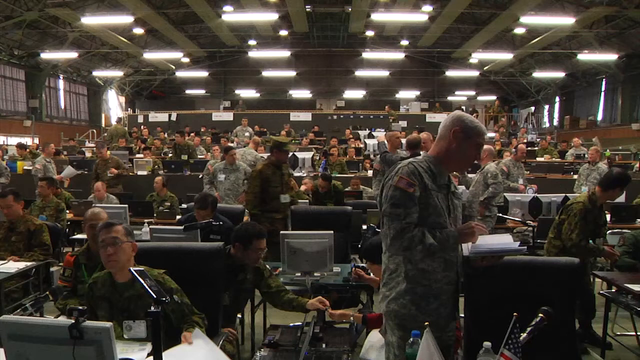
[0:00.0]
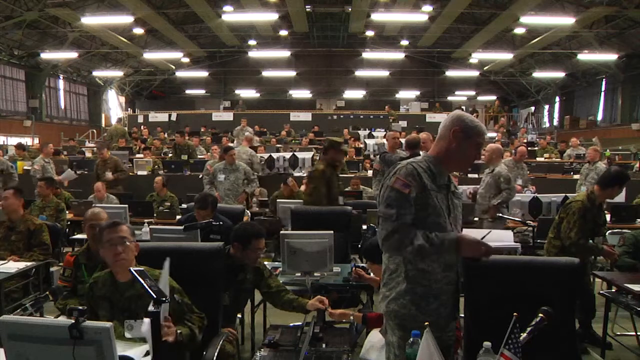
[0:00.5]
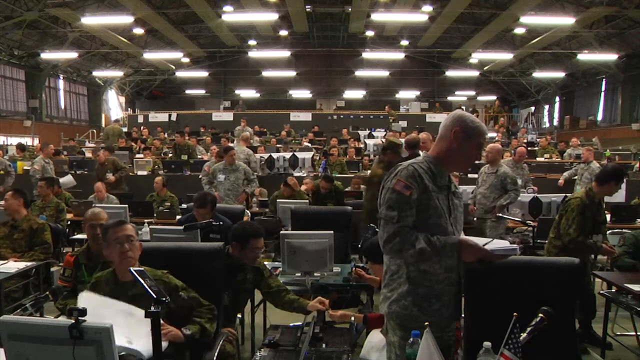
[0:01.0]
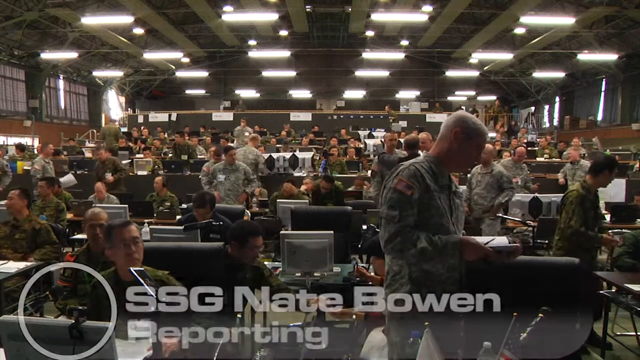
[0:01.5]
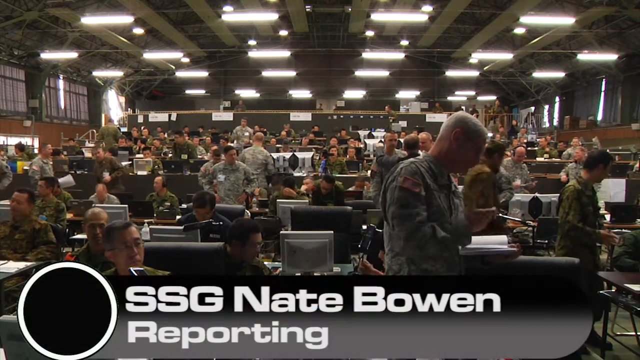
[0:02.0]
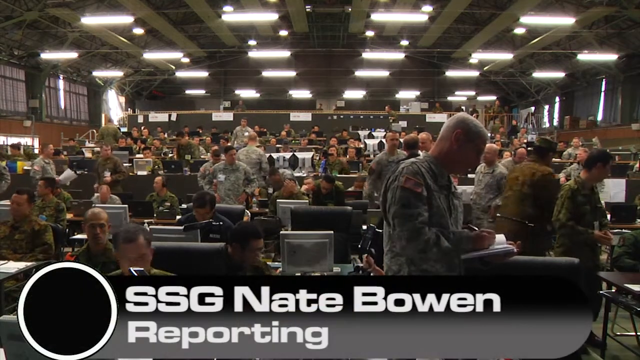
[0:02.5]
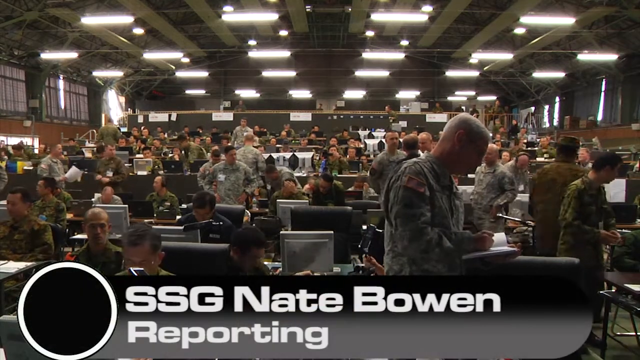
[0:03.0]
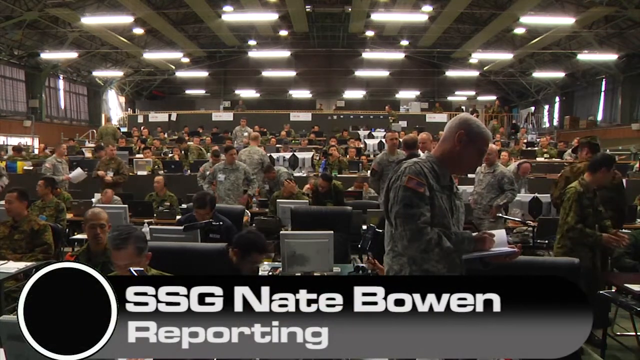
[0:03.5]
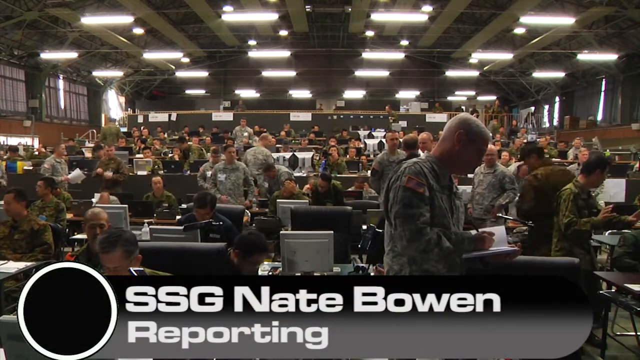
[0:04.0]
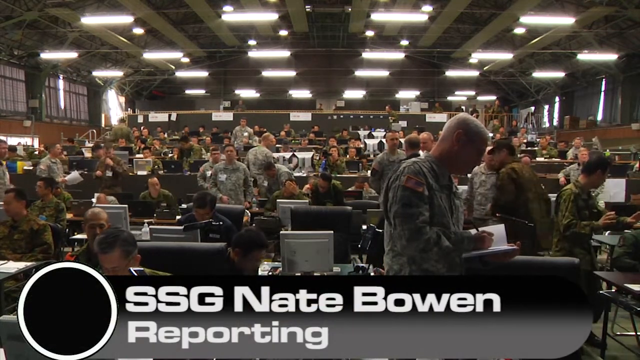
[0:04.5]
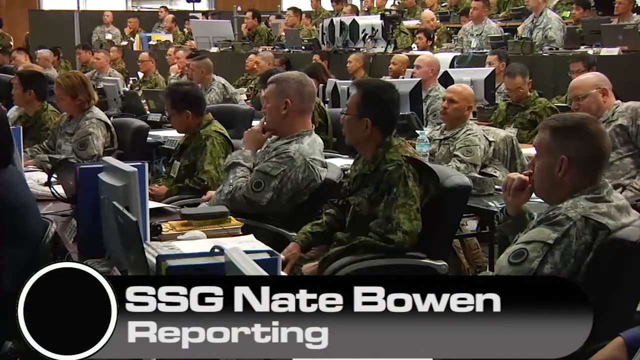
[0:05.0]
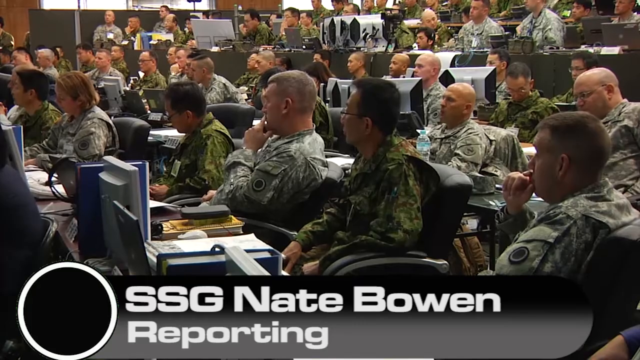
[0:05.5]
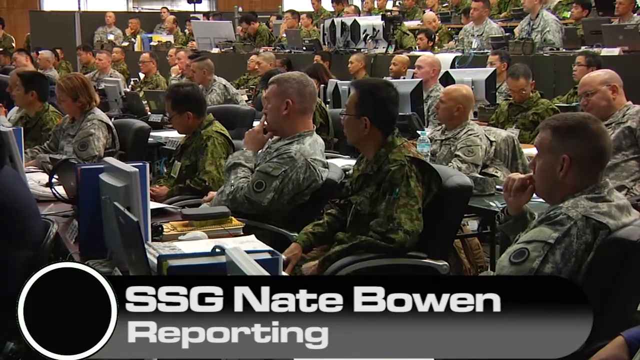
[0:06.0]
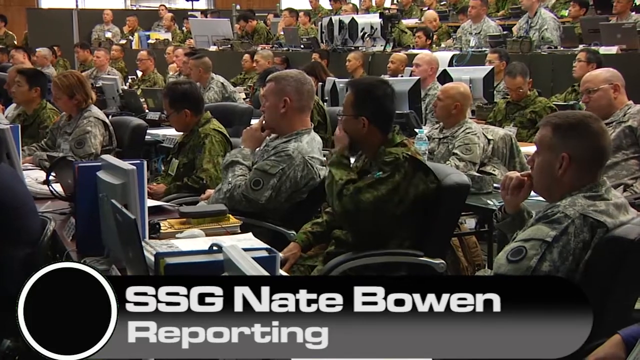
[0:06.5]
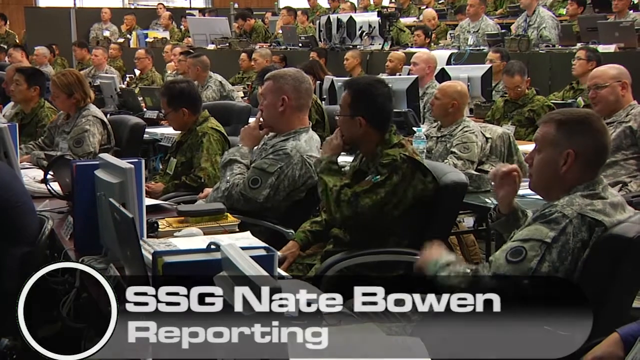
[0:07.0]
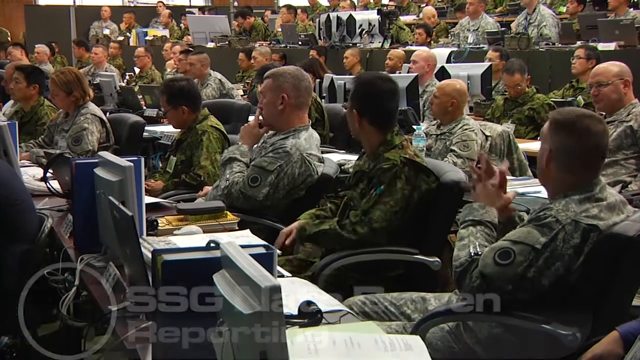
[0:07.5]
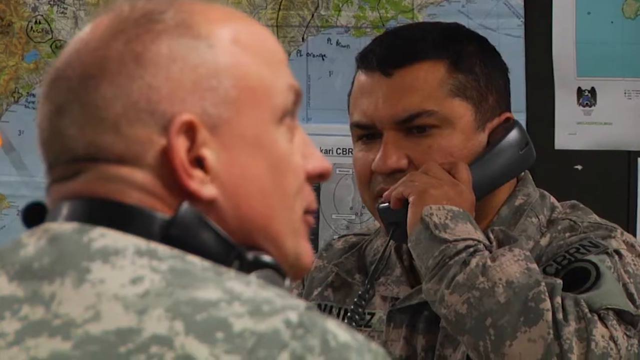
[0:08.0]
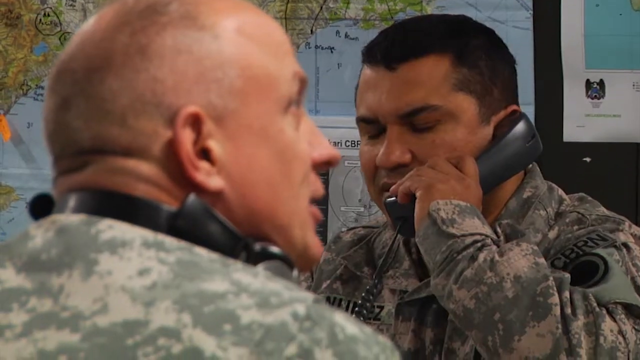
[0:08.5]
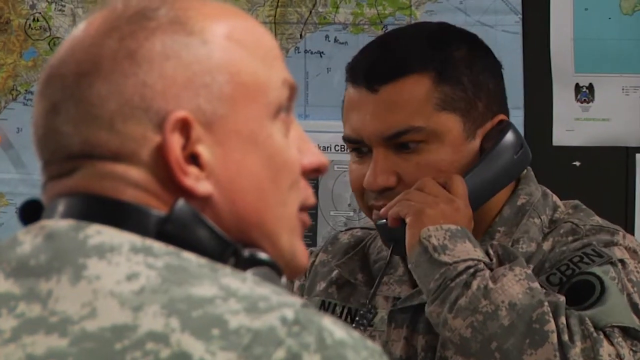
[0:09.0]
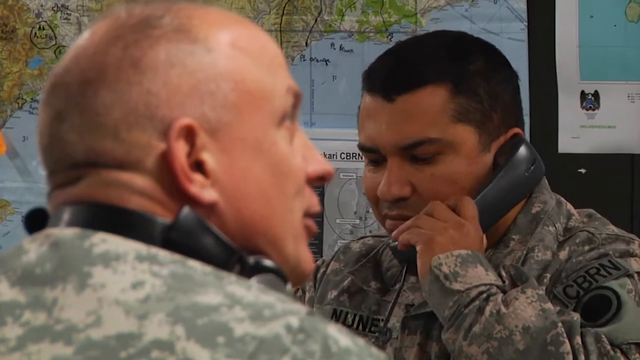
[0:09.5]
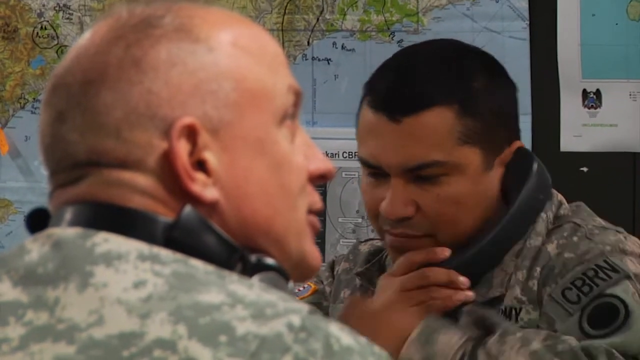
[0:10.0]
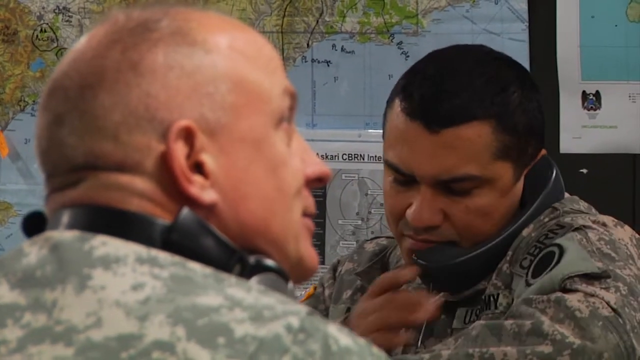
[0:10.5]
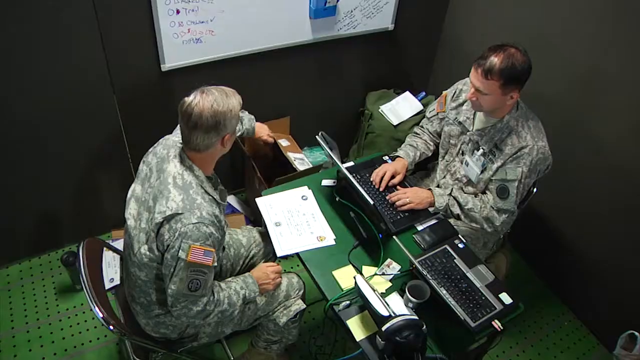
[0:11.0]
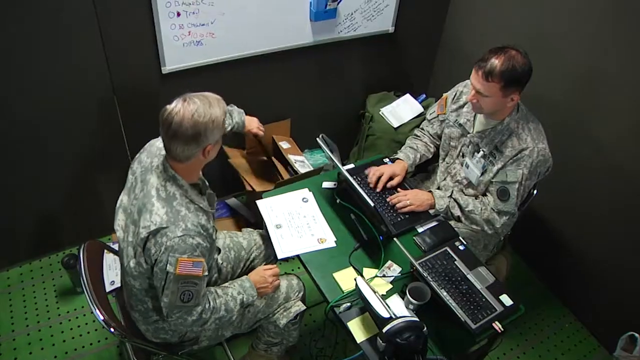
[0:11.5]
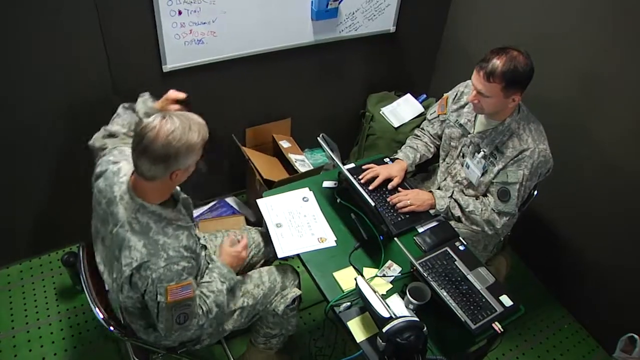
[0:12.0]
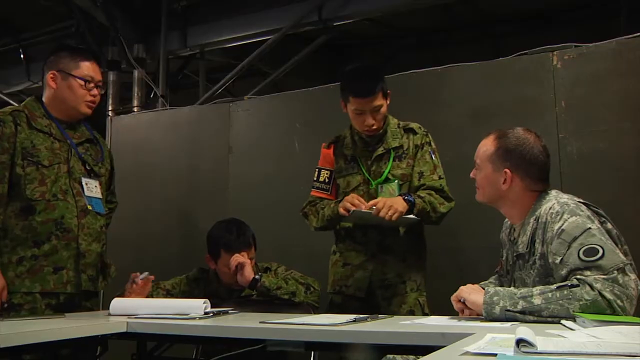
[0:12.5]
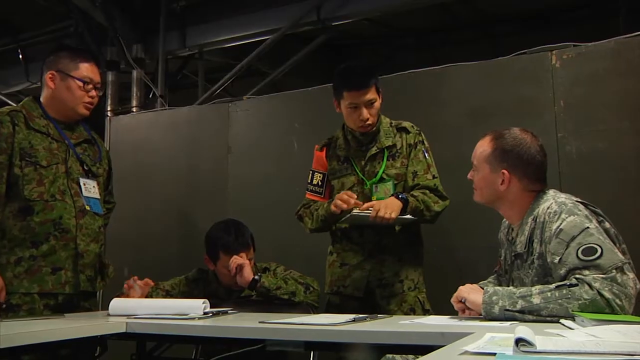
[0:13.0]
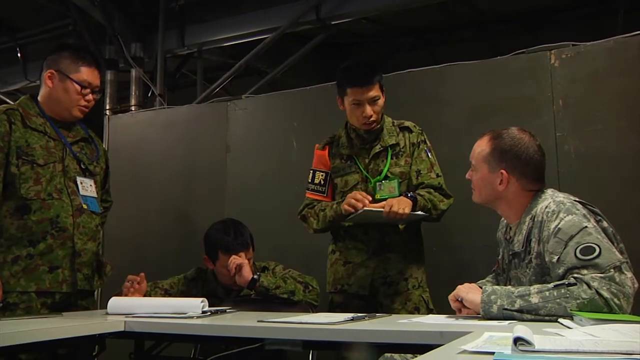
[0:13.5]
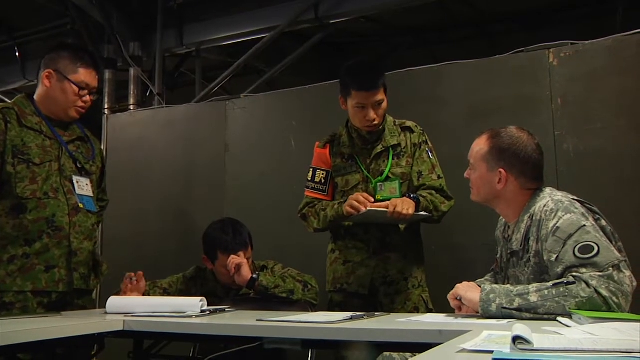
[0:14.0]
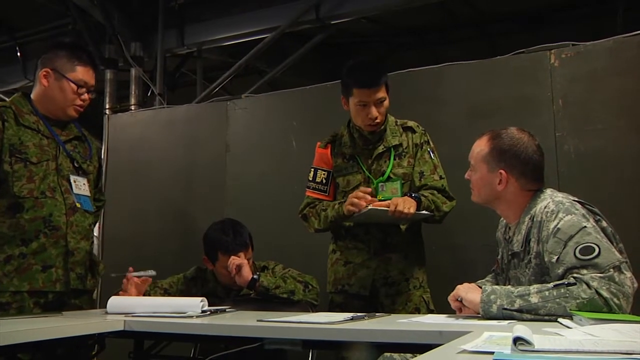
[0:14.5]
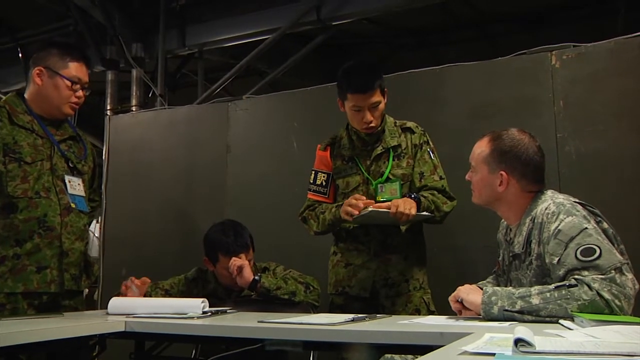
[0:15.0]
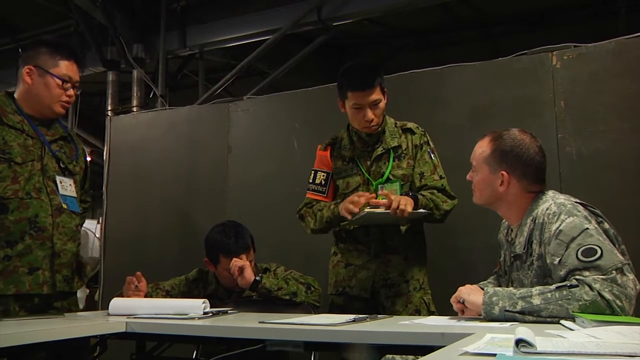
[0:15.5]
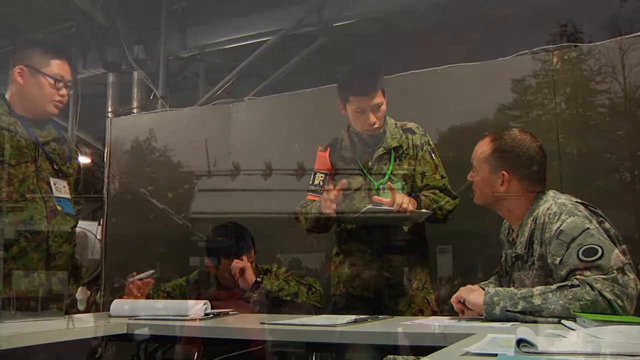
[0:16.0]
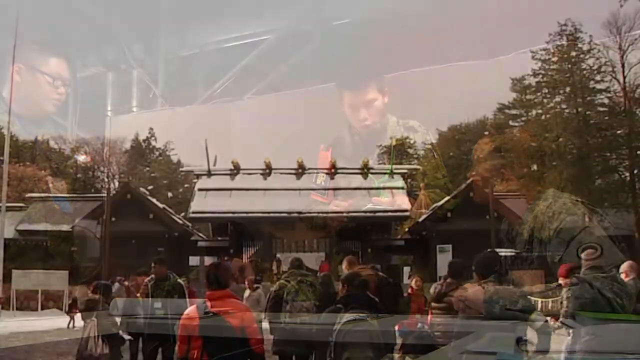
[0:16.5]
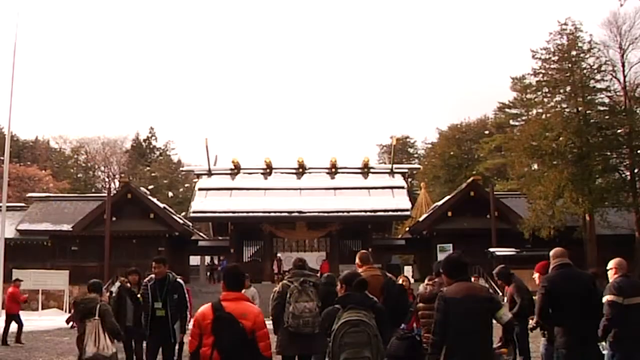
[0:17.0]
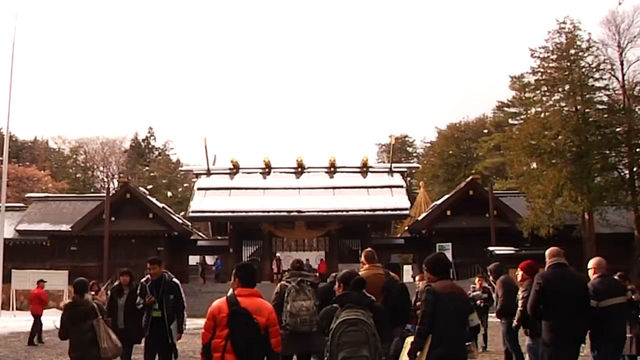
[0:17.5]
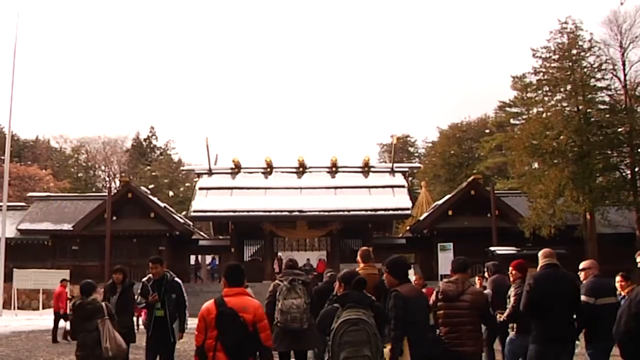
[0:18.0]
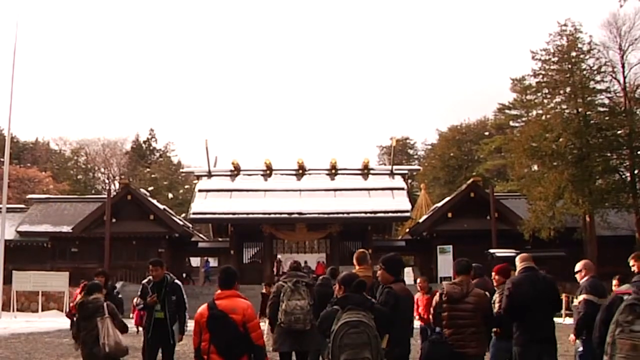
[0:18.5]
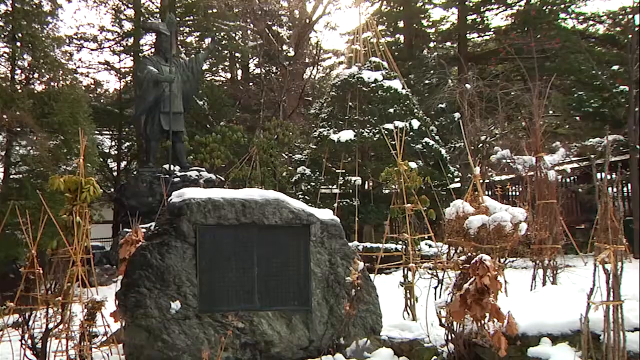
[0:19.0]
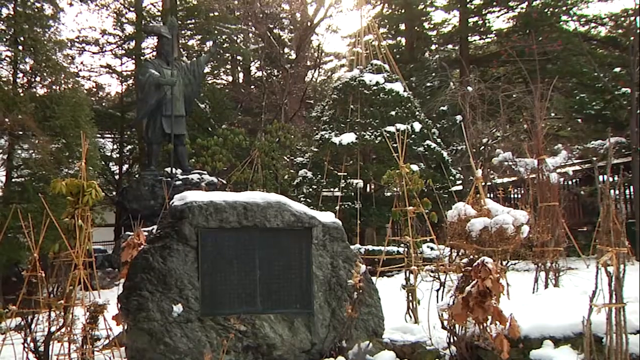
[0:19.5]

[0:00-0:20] The scene appears to be a military control bunker or hangar packed with far too many military personnel to count, probably at least 50 and close to 100 people, enough to make it crowded. The people are of different races, seemingly including European, African-American and Asian people. There seem to be lights across the top, with fluorescent lights everywhere, and at the very back there seems to be a riser with some items on it, where people, possibly commanders, are directing the activity. A header appears at the bottom reading "Staff Sergeant Nate Bowen reporting" on a black-to-gray gradient bar, with a black circle with a white ring around it and black shading inside and outside it. A new shot shows the military personnel from about the front or second row. Most have short buzz cuts or are completely bald, and there are also some women with longer hair. Some people are on phones and wearing headsets. Maps are visible in the background; one may show the east coast of the United States, though this is uncertain because the view moves in too close to make out the details. The scene moves to a room with two officers: one is on a laptop with a second laptop next to him, and another officer in front of him is pulling things out of boxes. Another group of four officers follows: one wears a lighter gray military fatigue uniform and the other three wear darker gray military outfits, and they are talking to the person in the lighter fatigues. The view then cuts outside to a building that looks very oriental, possibly in China or Japan, with a large collection of people in front of it. Rocks and snow are visible.